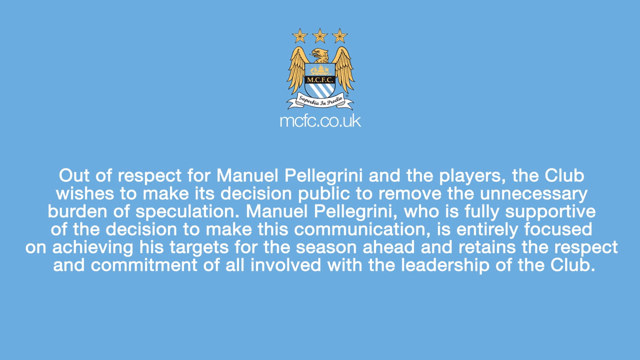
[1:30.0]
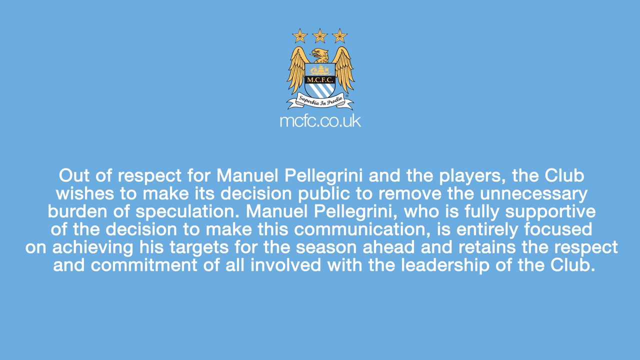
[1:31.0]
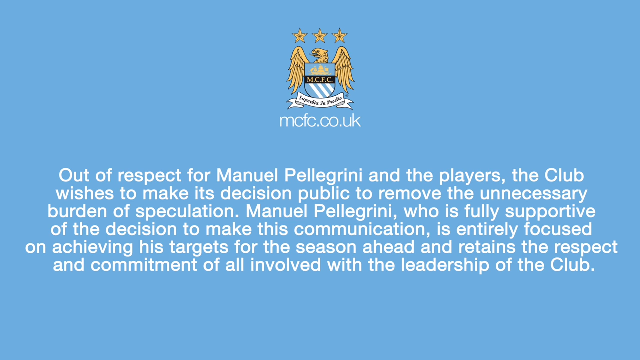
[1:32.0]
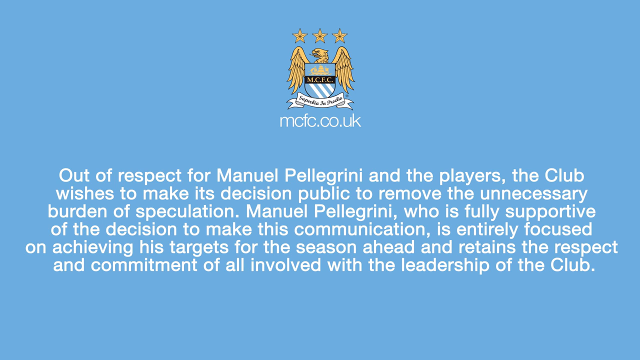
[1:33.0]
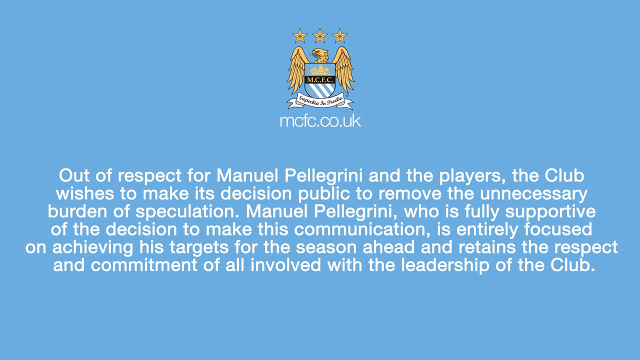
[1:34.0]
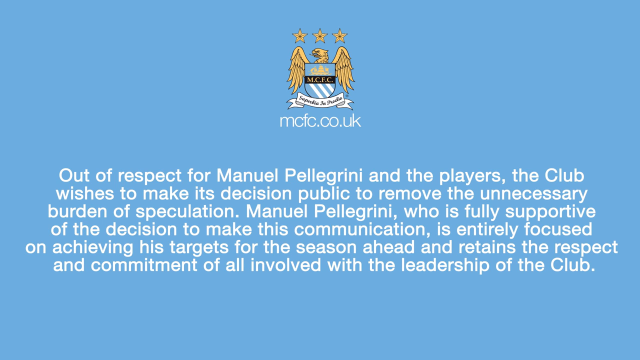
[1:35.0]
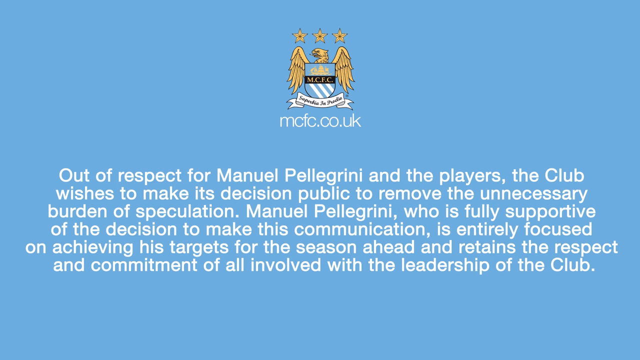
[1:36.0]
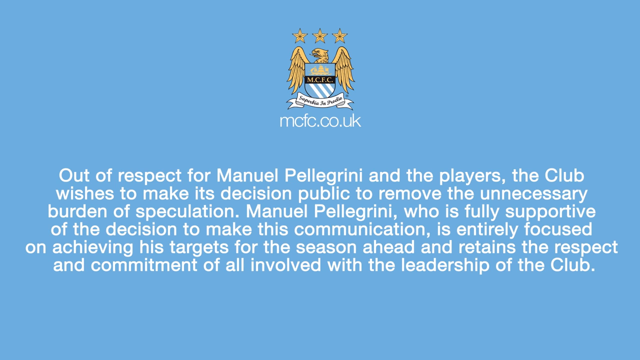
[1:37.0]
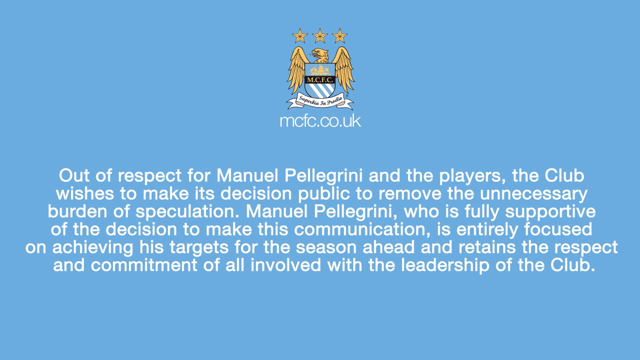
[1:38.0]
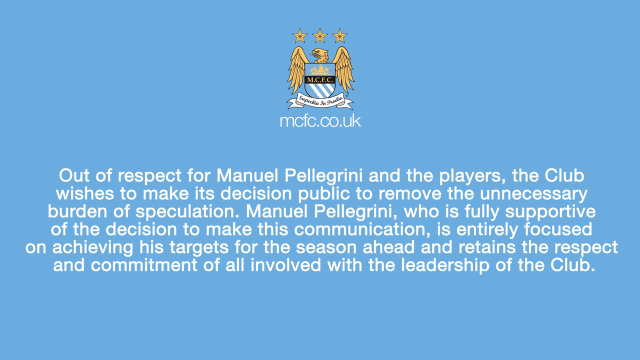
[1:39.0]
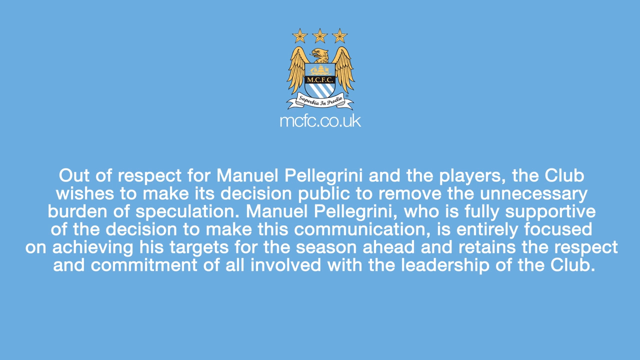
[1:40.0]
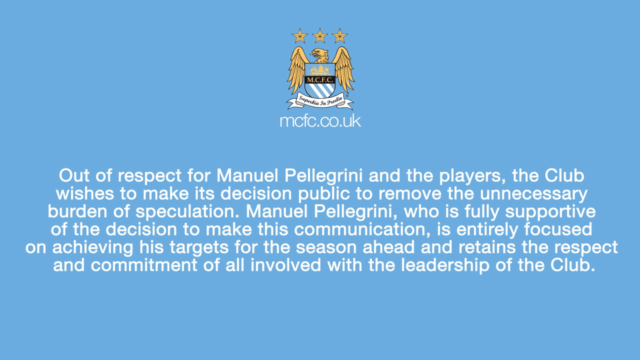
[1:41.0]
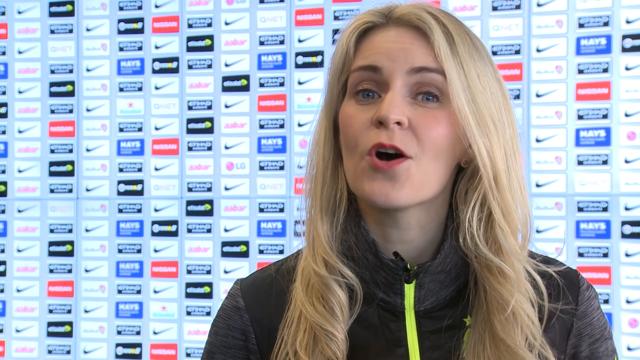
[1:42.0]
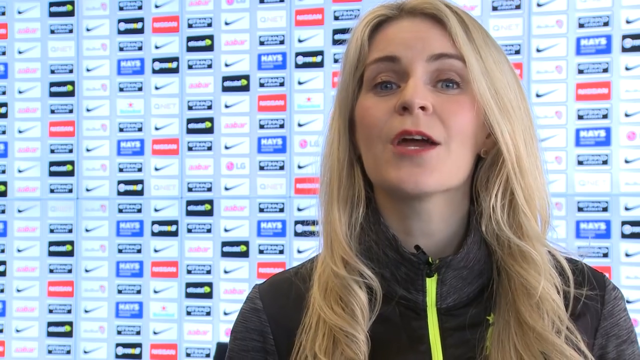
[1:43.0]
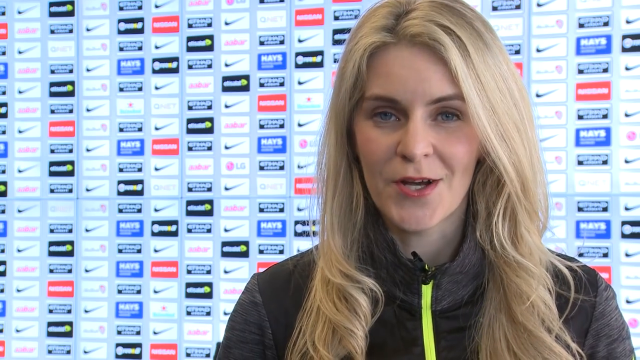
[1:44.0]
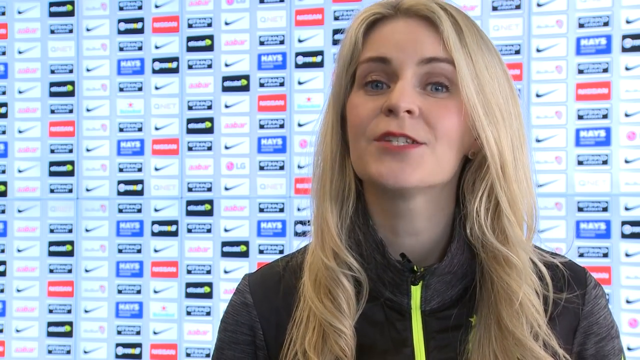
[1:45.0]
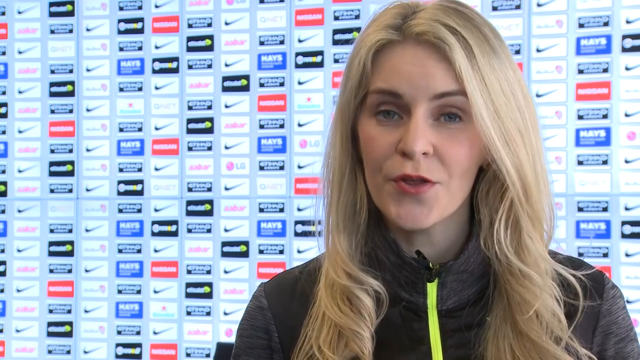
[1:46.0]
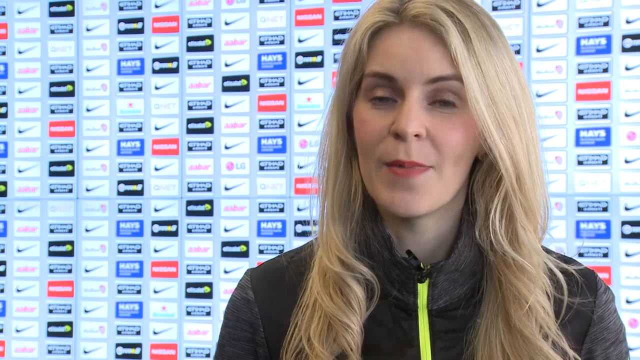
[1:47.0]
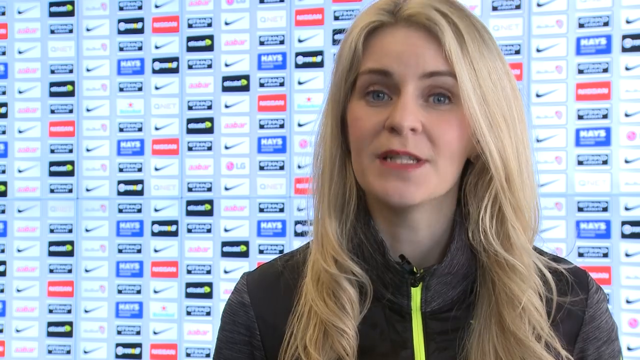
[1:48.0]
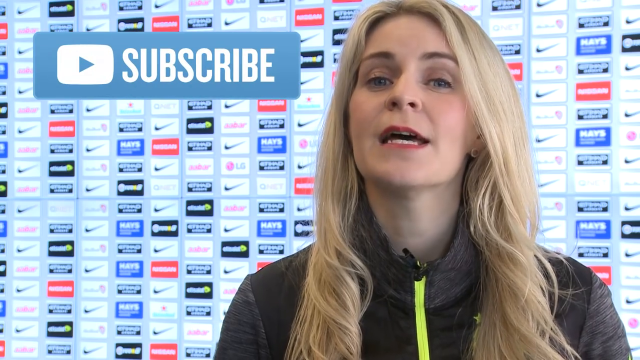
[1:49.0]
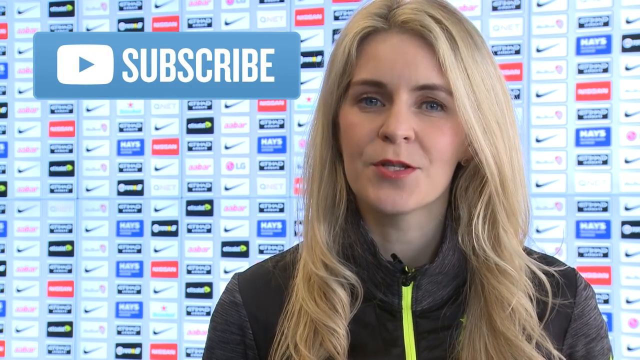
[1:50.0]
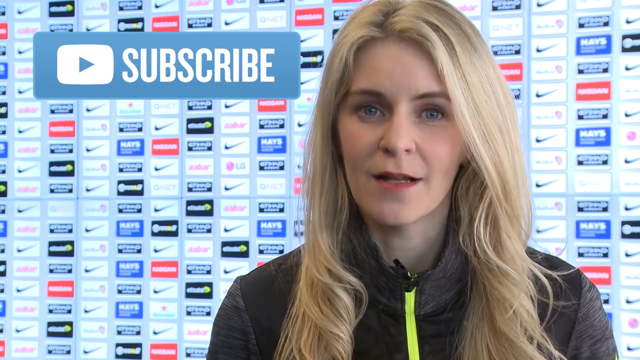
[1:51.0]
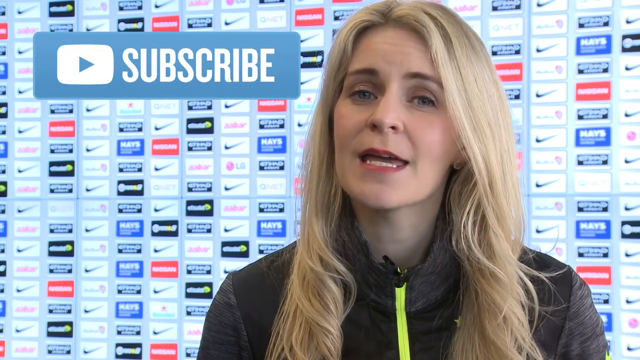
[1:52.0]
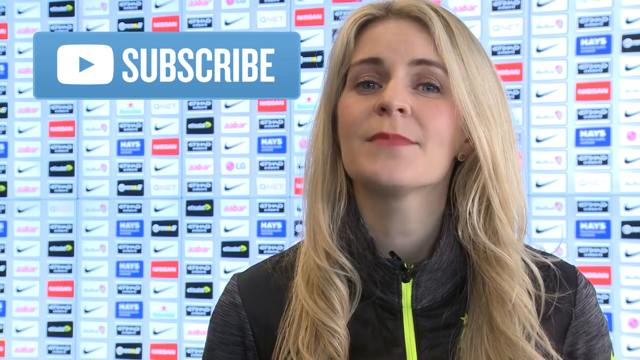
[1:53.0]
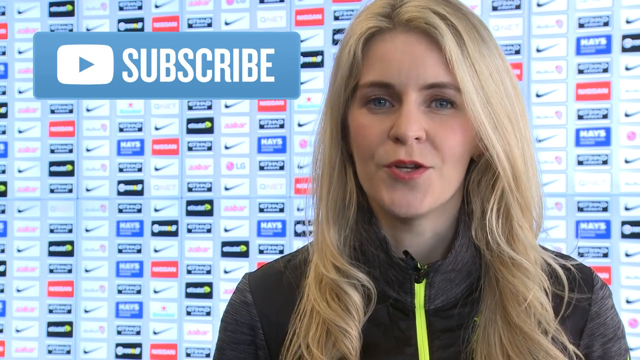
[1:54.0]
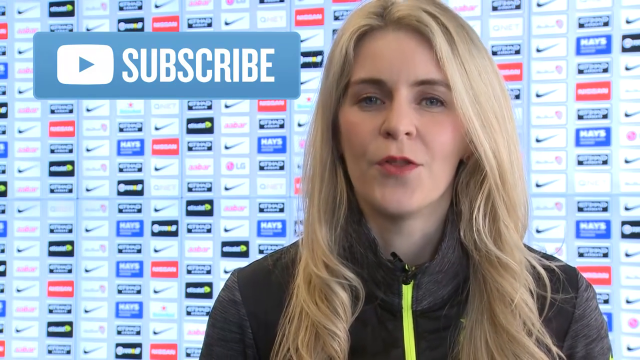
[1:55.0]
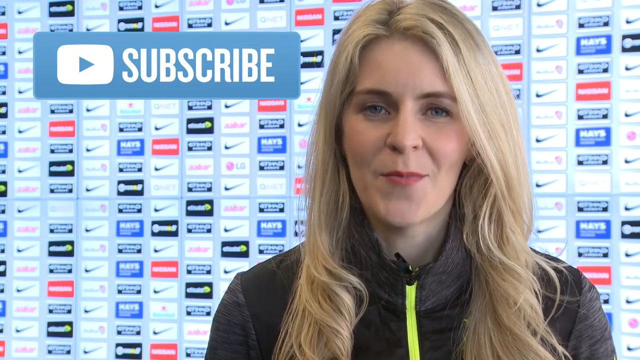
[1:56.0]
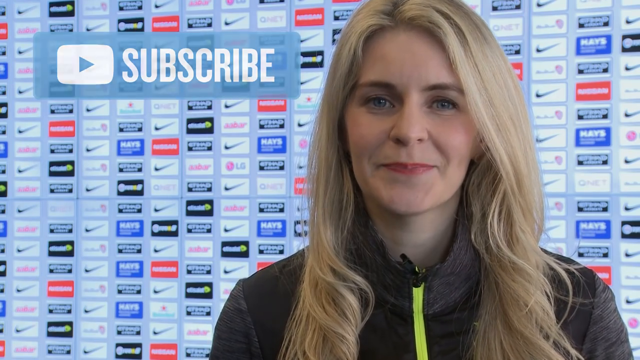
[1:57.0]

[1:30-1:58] The blue screen shows white text below the coat of arms with the golden eagle and the three stars above. The text reads: "Out of respect for Manuel Pellegrini and the players, the club wishes to make its decision public to remove the unnecessary burden of speculation. Manuel Pellegrini, who is fully supportive of the decision to make this communication, is entirely focused on achieving his targets for the season ahead and retains the respect and commitment of all involved with the leadership of the club." The video then cuts to the blonde woman, who faces the screen talking. She nods her head several times and raises her eyebrows as she speaks. A subscribe logo and a grid of logos are behind her.